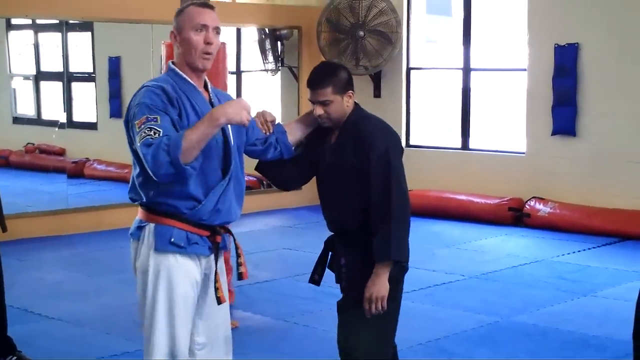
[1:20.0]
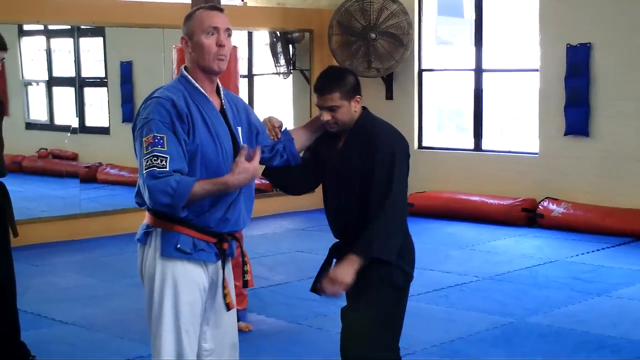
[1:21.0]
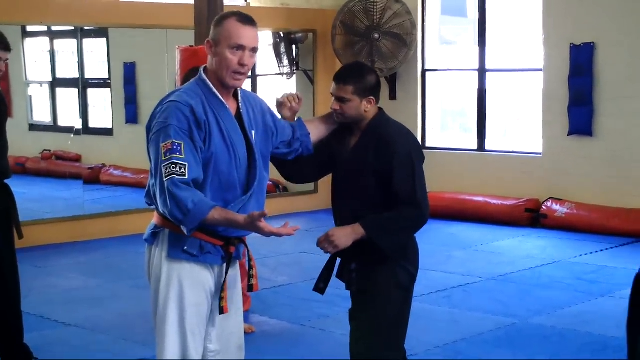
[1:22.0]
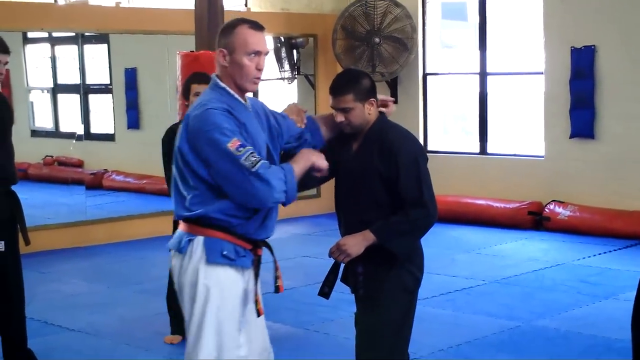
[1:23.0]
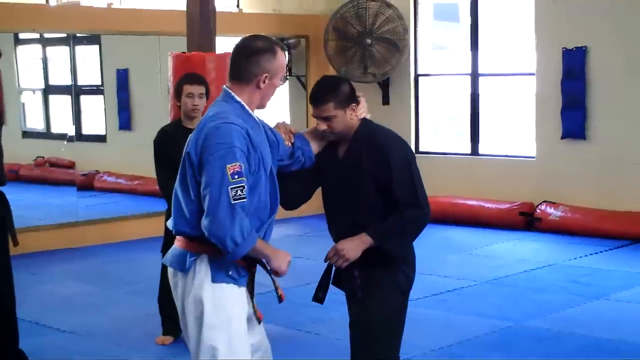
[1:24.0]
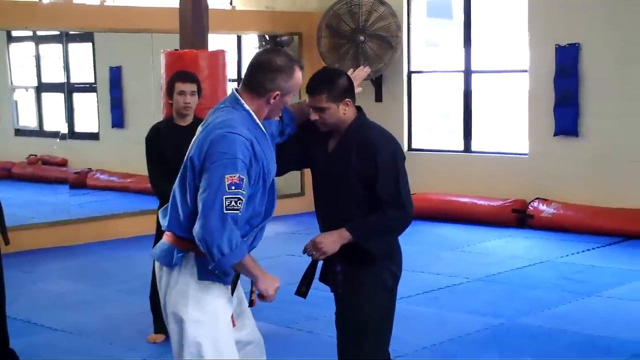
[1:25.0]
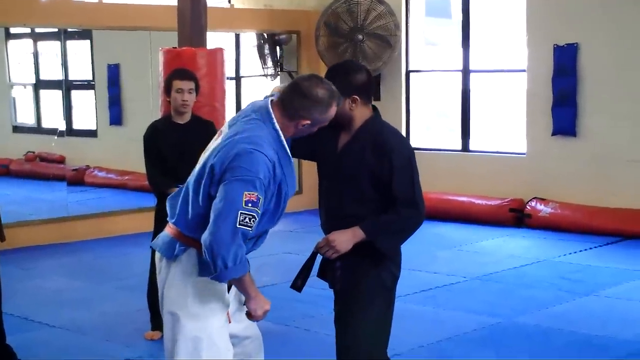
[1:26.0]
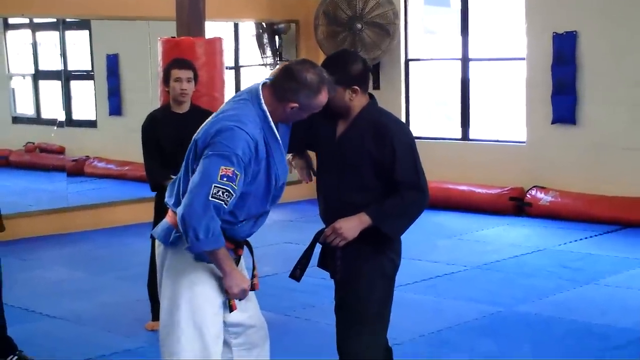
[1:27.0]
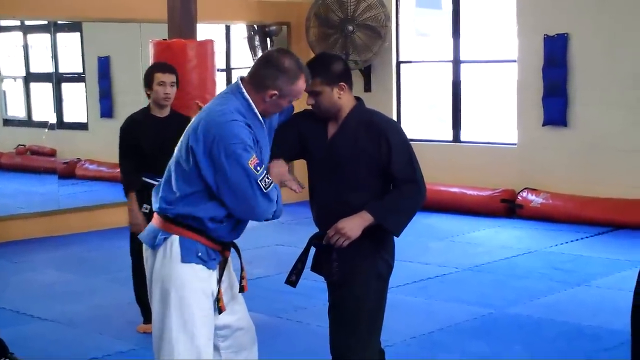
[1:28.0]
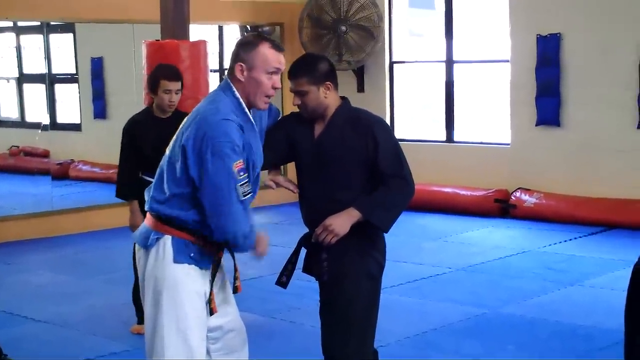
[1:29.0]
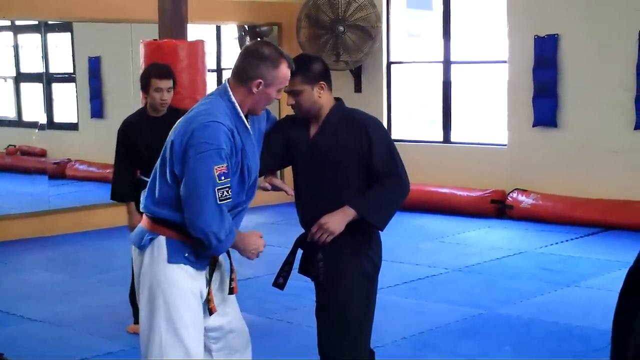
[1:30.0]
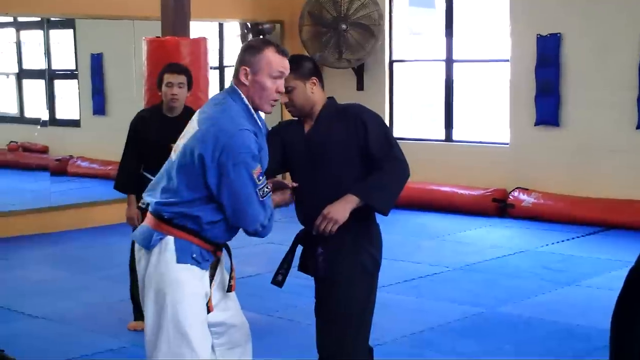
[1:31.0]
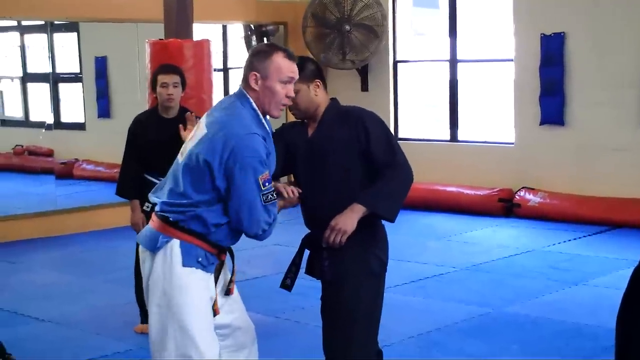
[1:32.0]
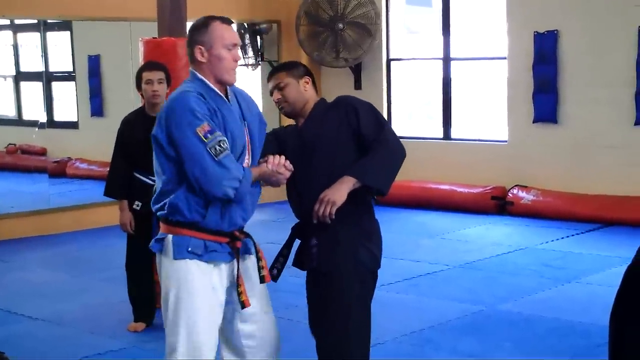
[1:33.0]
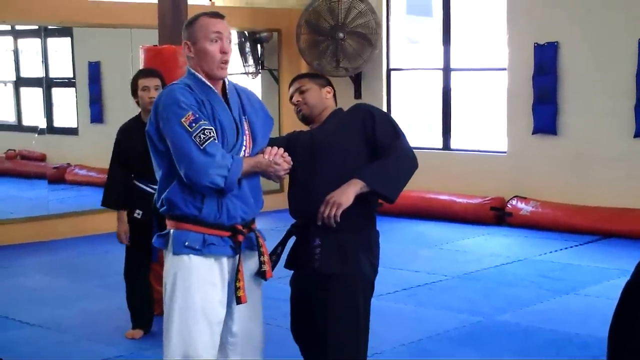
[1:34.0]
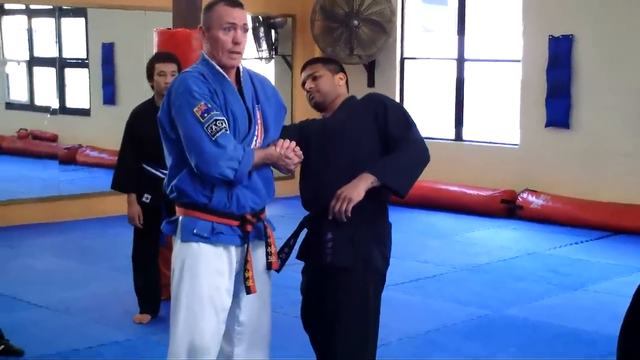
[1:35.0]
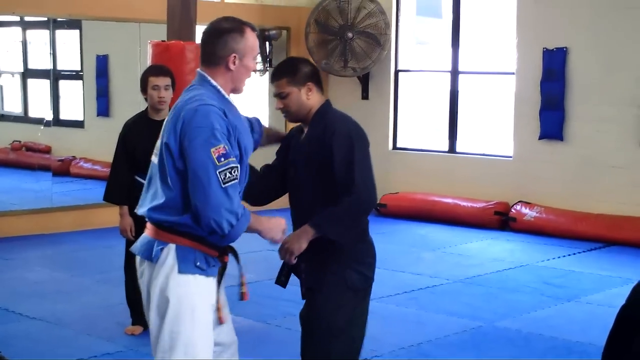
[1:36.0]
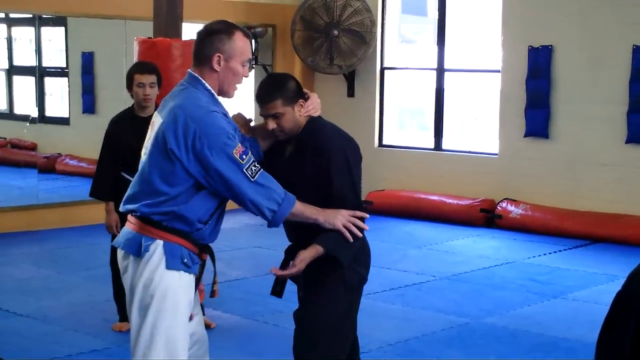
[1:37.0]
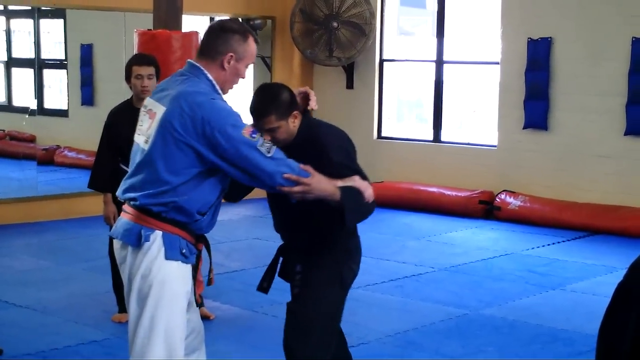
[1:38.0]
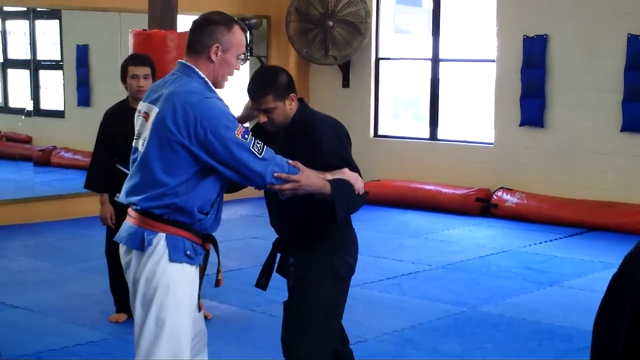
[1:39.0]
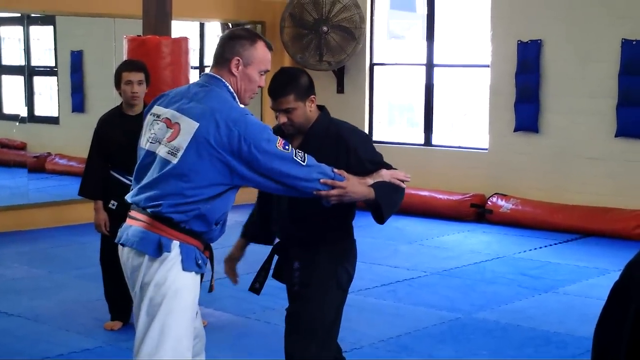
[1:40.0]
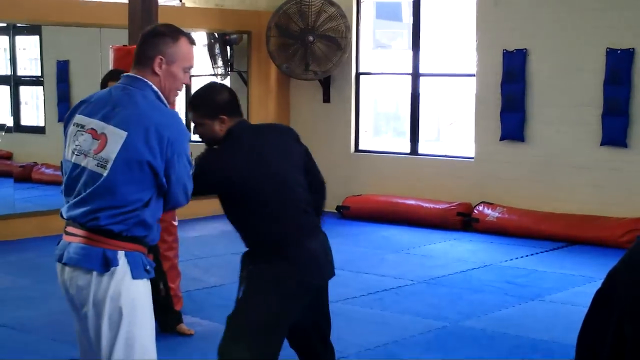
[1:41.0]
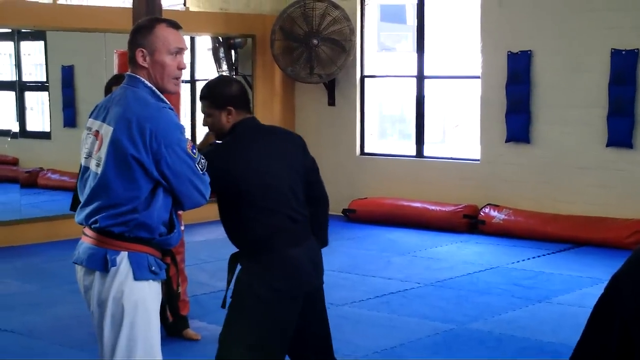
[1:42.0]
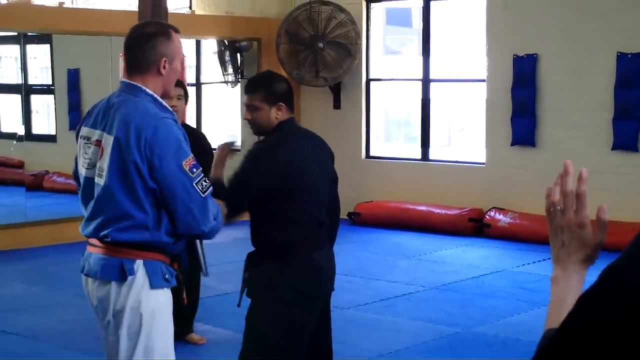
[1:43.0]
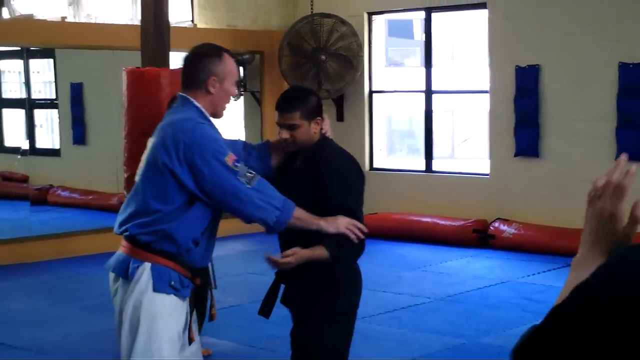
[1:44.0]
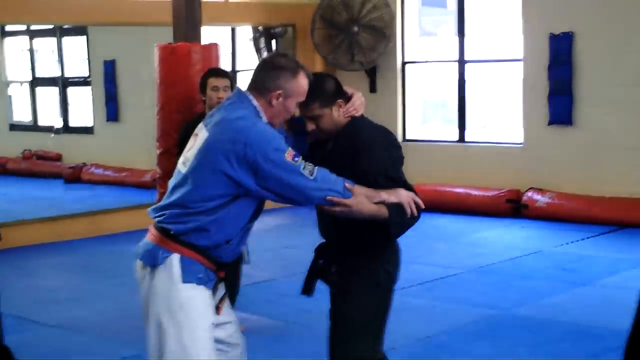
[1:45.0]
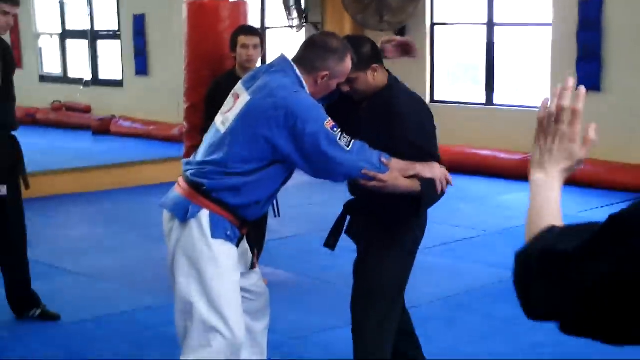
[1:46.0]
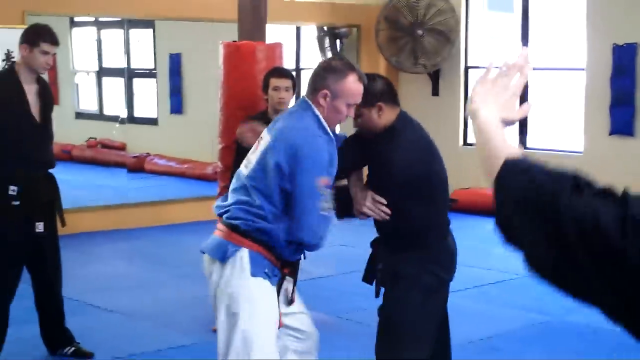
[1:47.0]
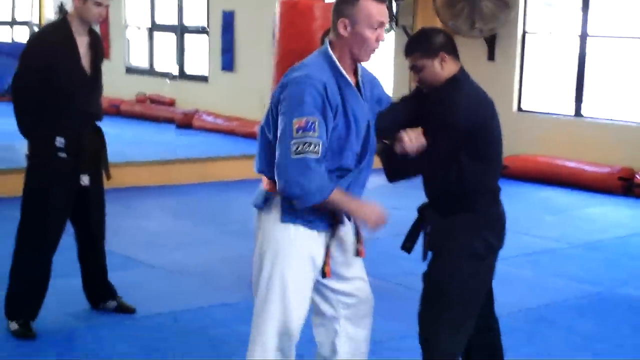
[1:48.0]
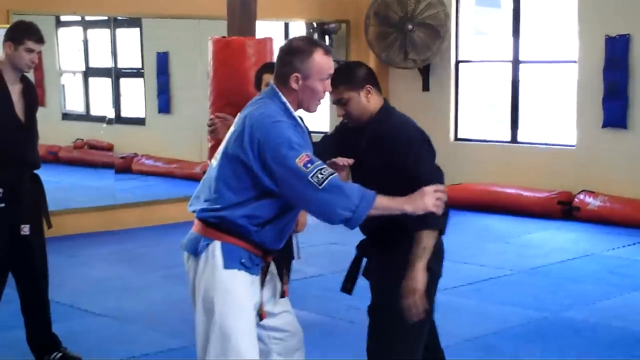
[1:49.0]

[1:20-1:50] In a martial arts class, the instructor demonstrates a move while talking to his class. He takes a student's arm and shows the other students how to make the move, bringing his hand behind the student's head, then grabbing the student's arm and pushing it through. The other students walk around, trying to get a closer look at the demonstration. One person makes movements with their arm while watching, in order to learn it better, and other students change their position and gather around to see more clearly. The gym has a padded floor, a padded column that comes down in the middle of the floor, and pads on the side underneath the window. There is a very large fan in the room, part of the walls are mirrored, and a very large window brings in a lot of light.